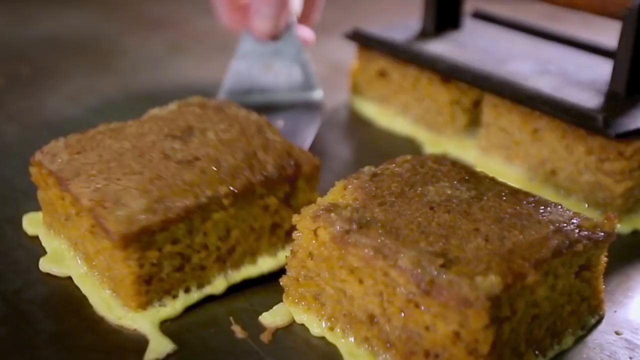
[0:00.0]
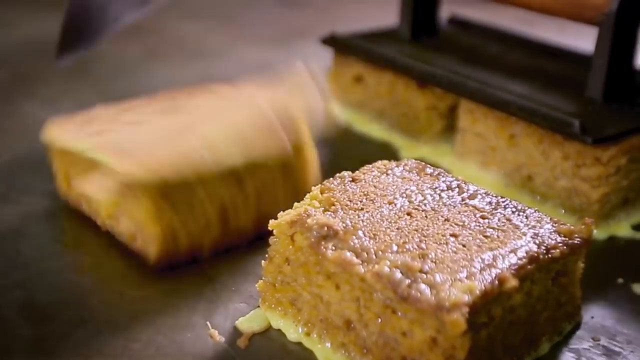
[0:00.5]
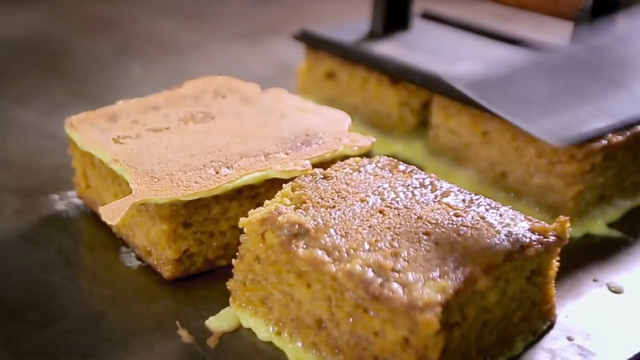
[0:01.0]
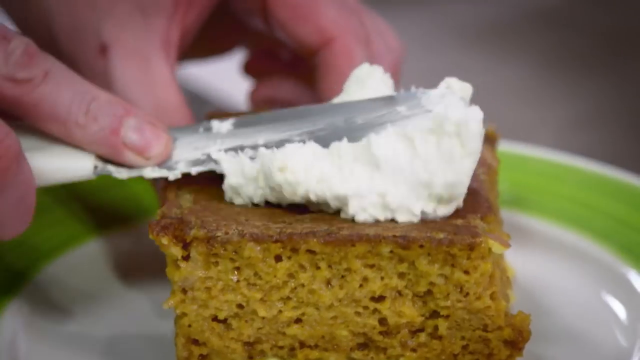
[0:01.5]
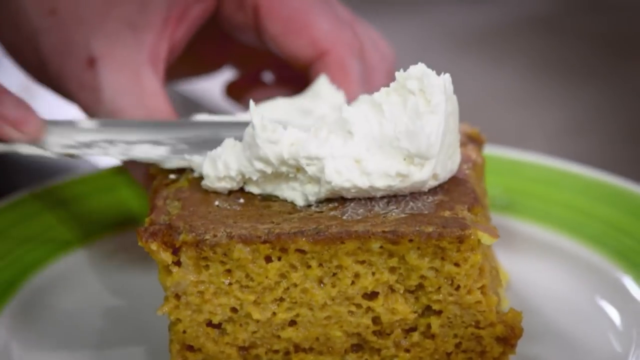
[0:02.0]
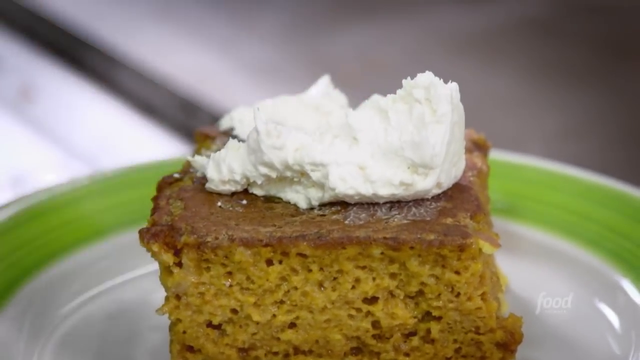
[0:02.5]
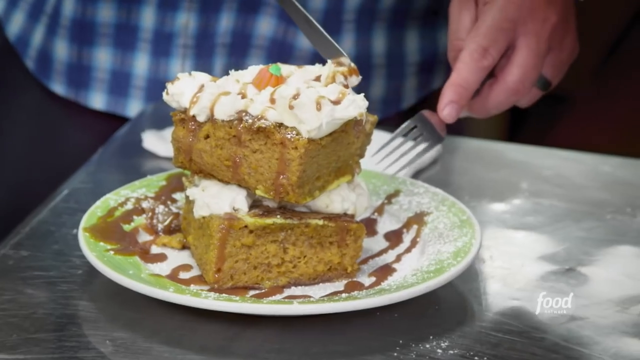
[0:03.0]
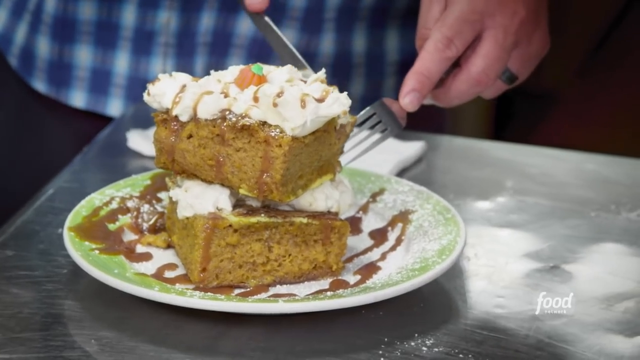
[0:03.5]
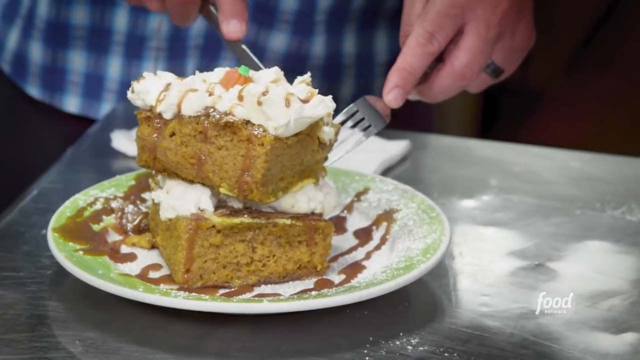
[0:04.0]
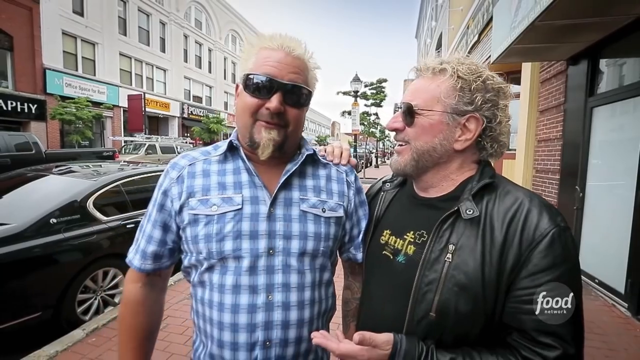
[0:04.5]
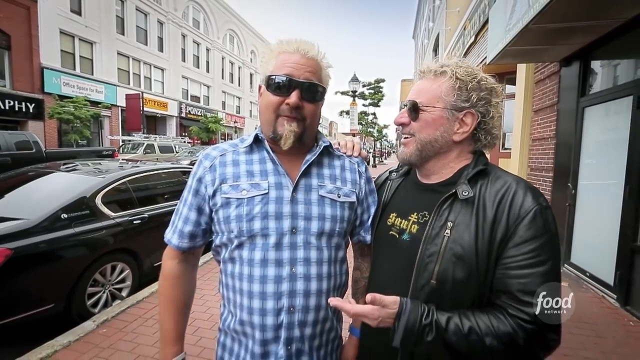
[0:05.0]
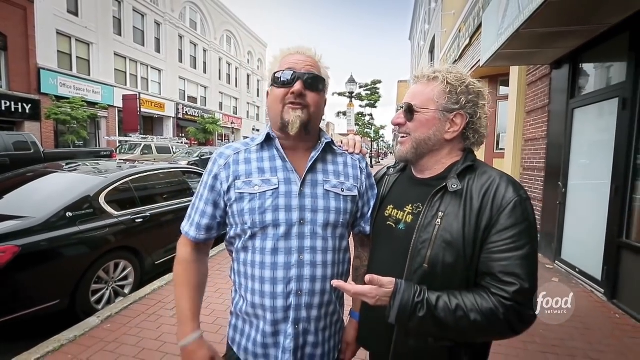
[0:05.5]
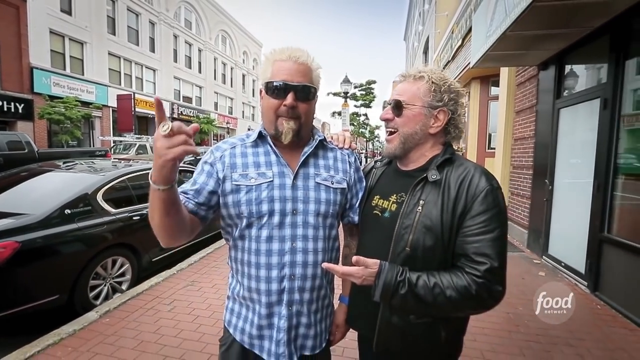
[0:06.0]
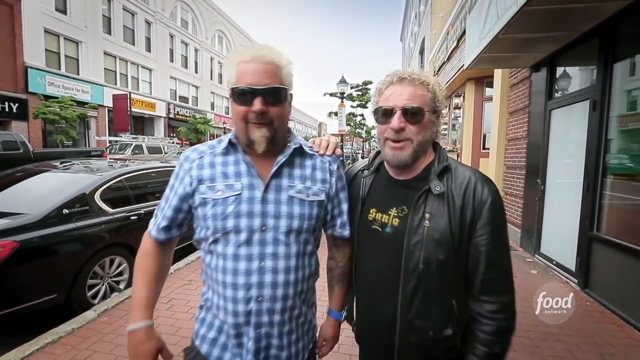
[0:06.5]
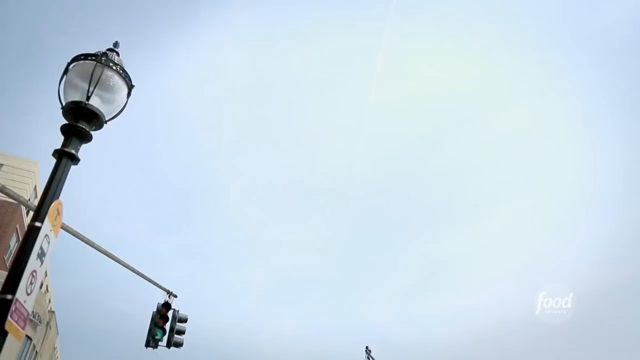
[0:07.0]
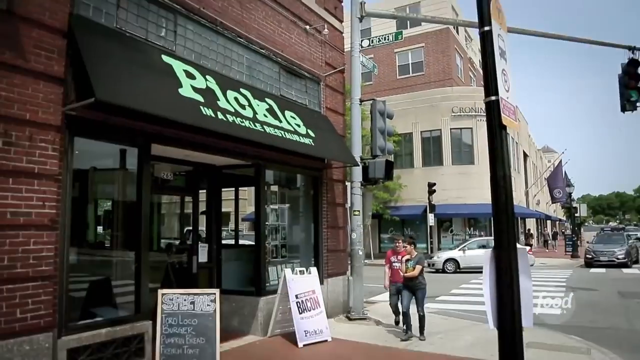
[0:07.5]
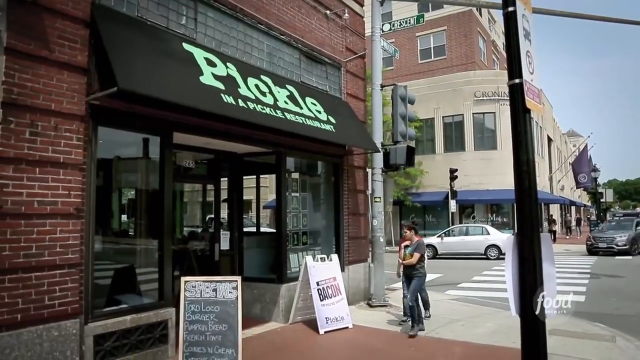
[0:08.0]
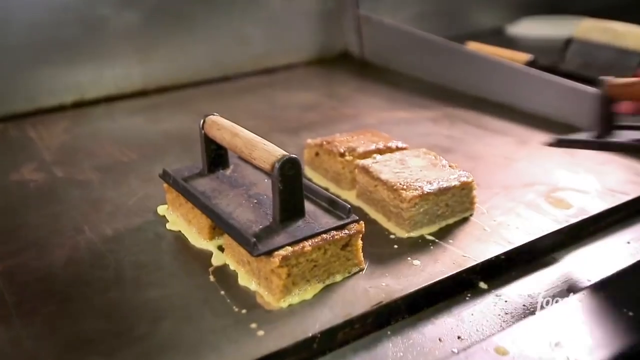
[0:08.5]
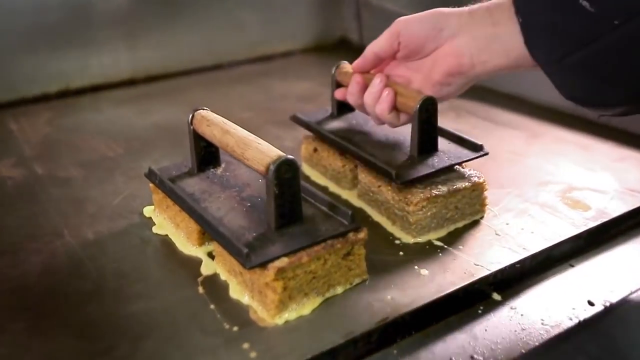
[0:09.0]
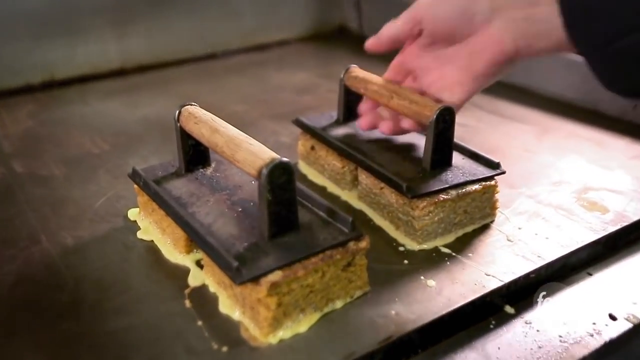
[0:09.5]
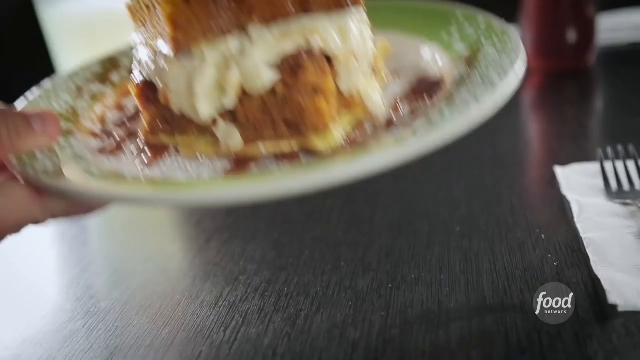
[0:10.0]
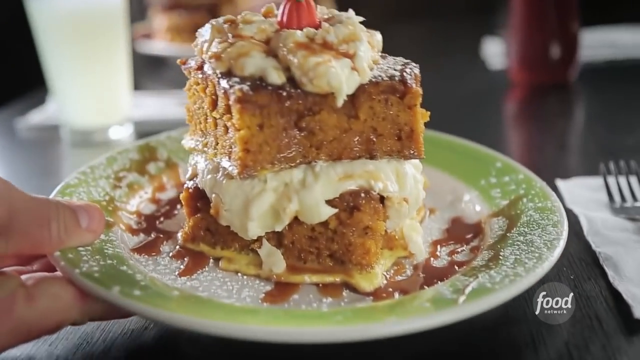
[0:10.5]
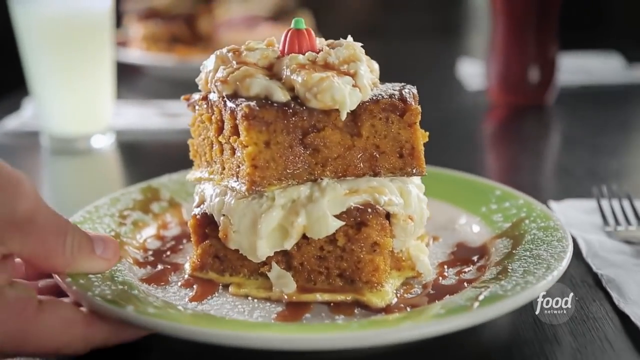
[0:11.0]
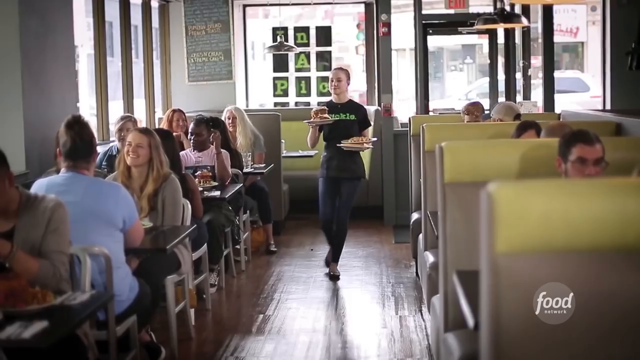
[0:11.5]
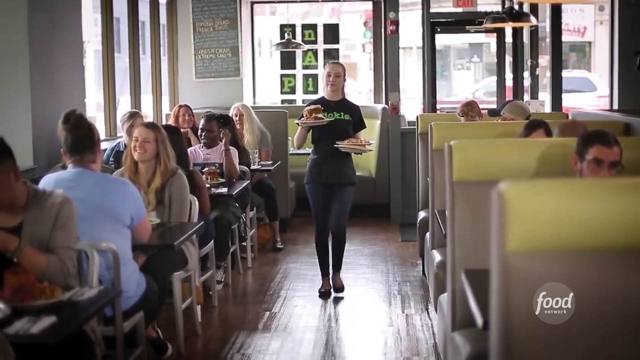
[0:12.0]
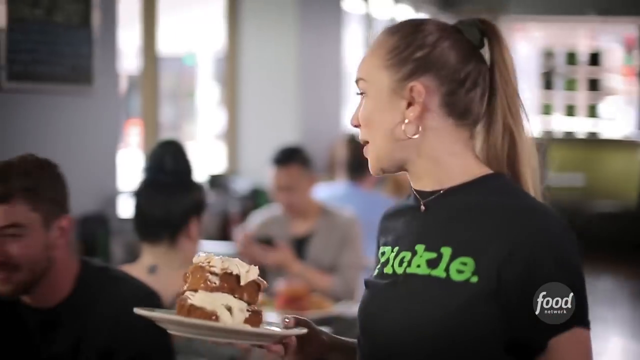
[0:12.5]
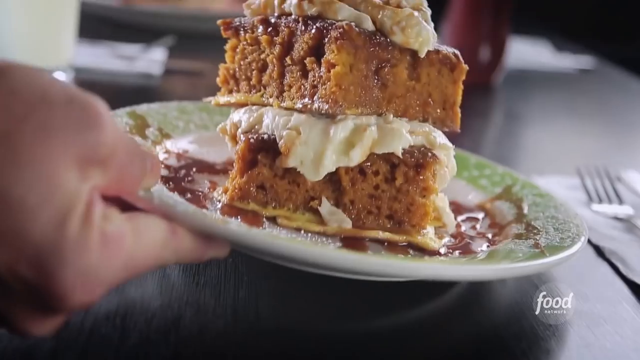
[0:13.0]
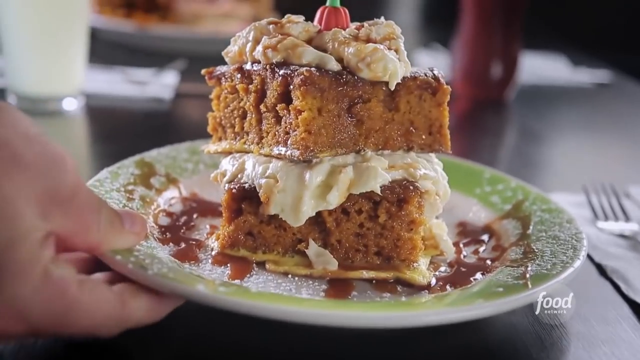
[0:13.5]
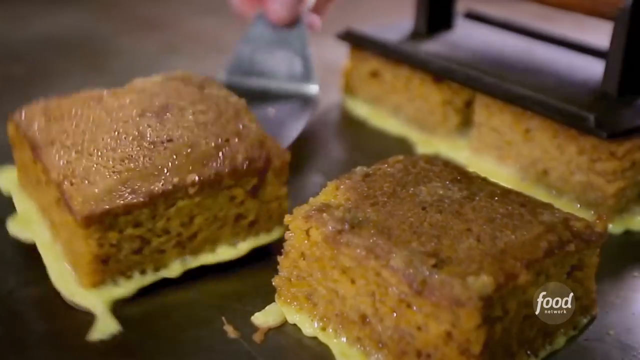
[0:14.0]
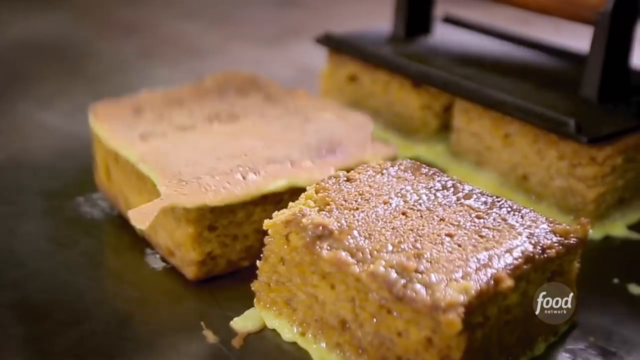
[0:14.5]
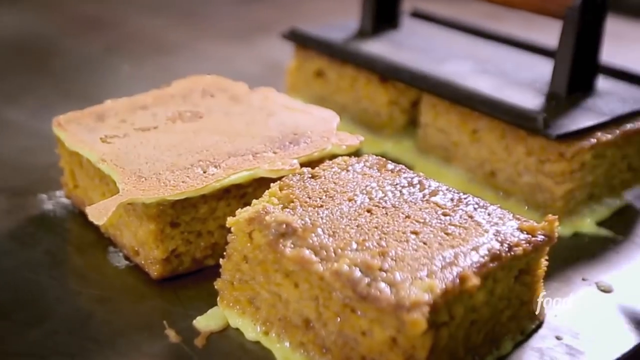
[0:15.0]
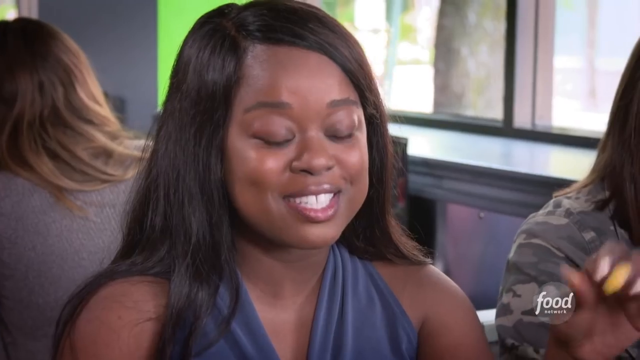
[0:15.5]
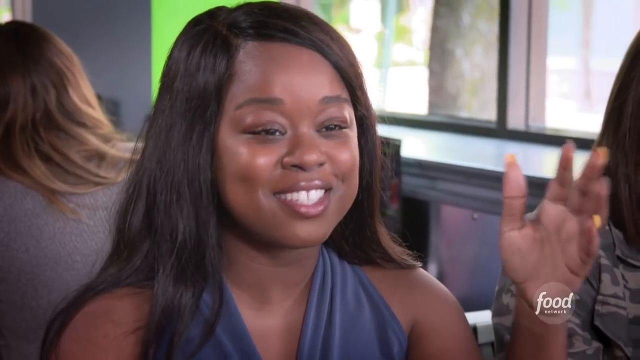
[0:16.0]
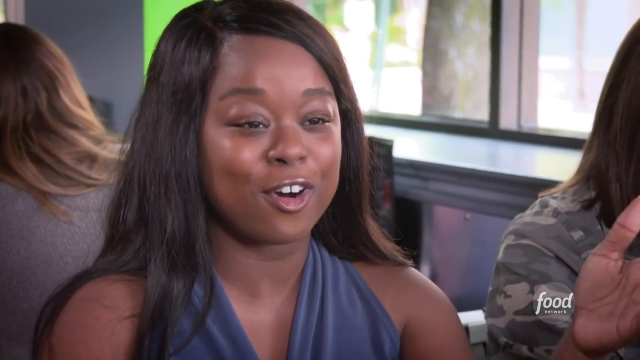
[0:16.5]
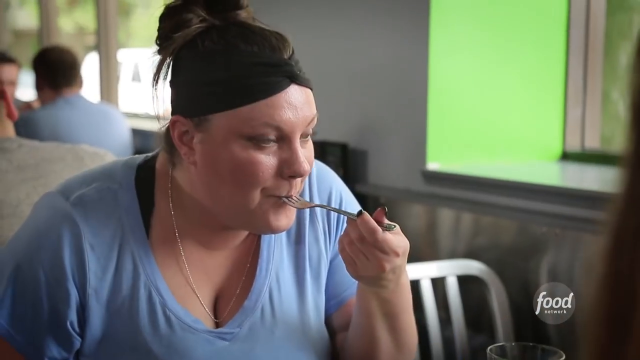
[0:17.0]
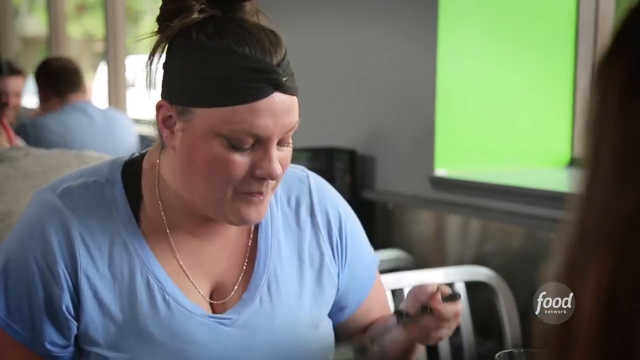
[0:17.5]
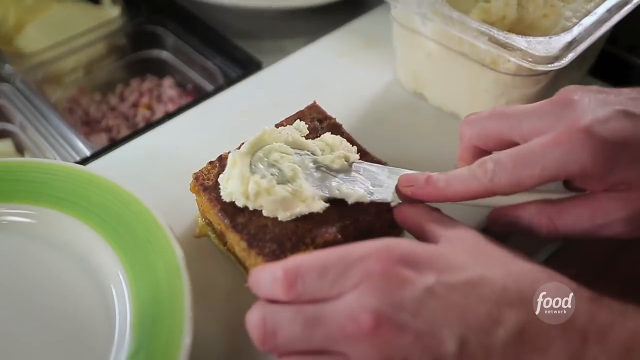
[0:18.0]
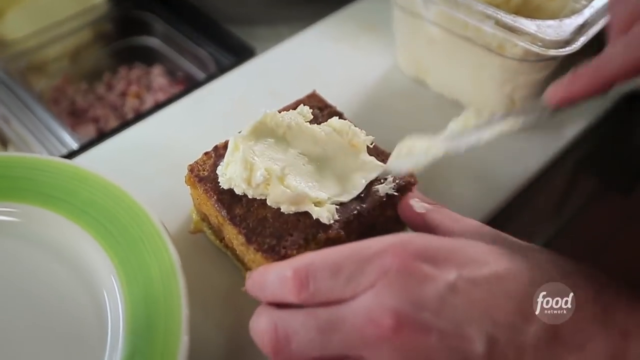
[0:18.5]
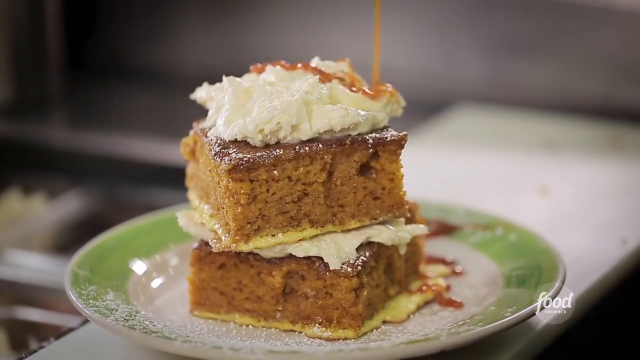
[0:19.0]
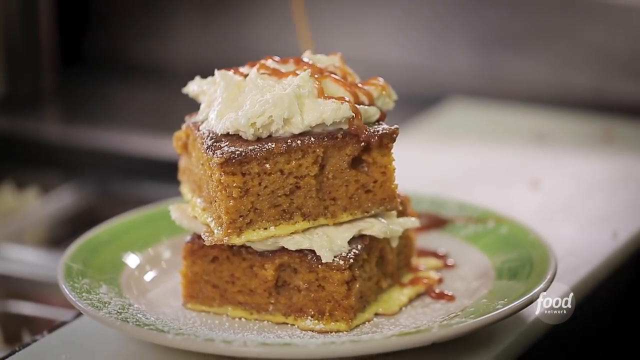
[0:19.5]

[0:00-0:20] The video opens on an episode of Diners, Drive-ins and Dives. Someone flips cakes as if frying them. Guy Fieri cuts what looks like some type of carrot cake, though it could possibly be cornbread topped with potatoes and a little gravy; it looks exactly like a carrot cake. He stands next to the rock star Sammy Hagar, and the two go into a place called Pickle.